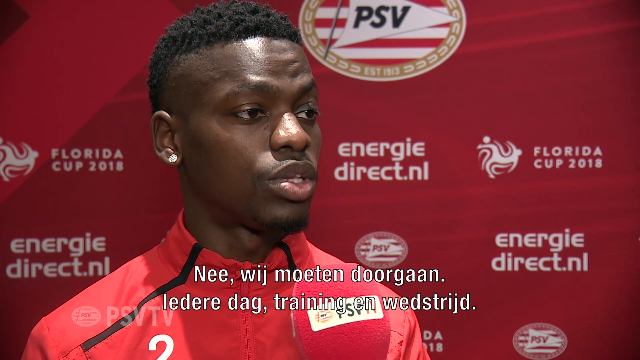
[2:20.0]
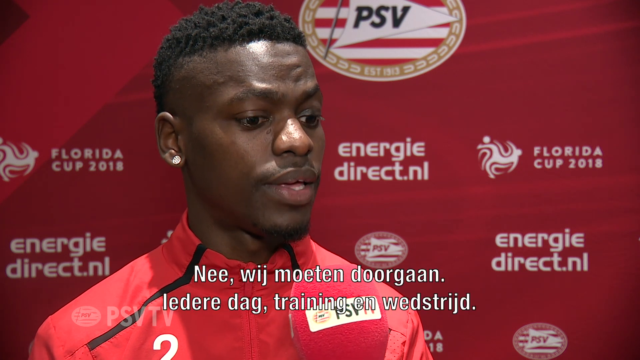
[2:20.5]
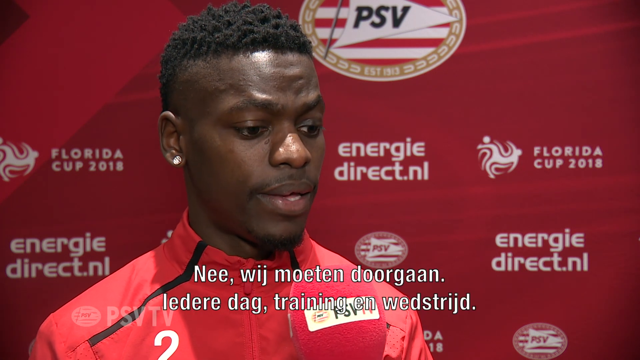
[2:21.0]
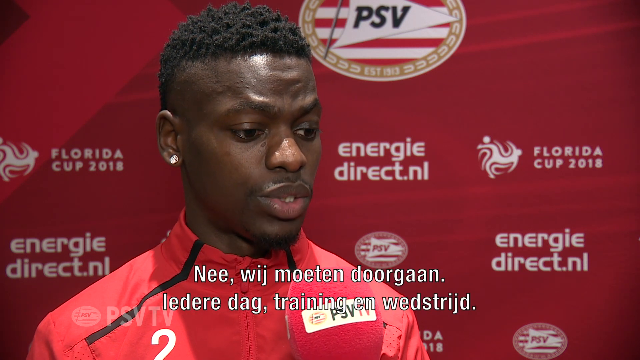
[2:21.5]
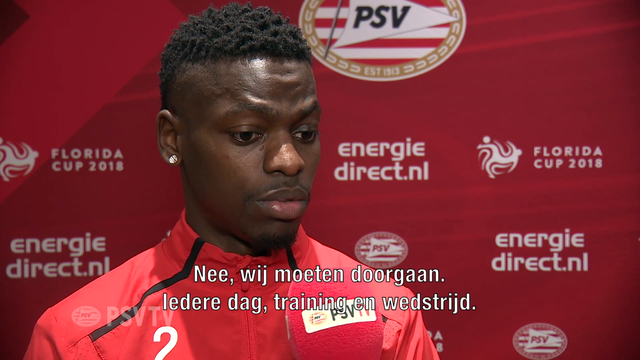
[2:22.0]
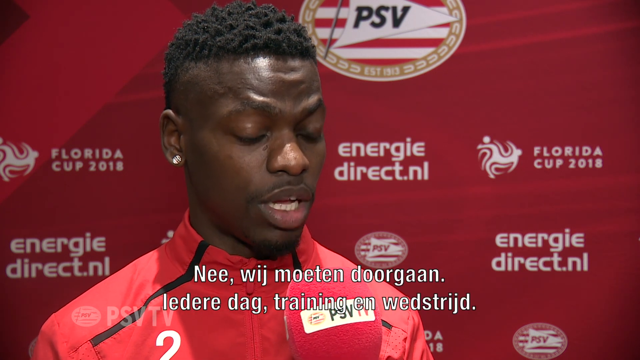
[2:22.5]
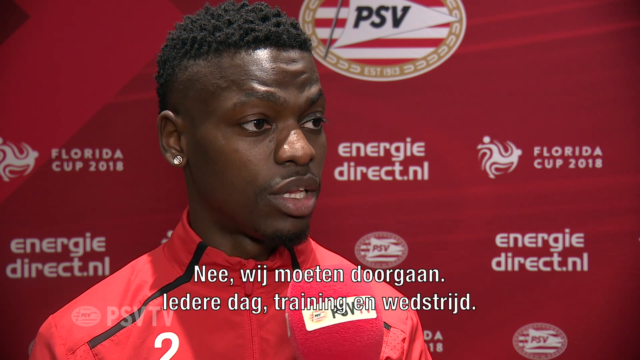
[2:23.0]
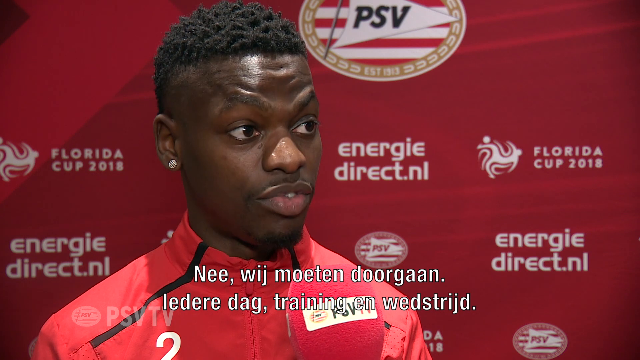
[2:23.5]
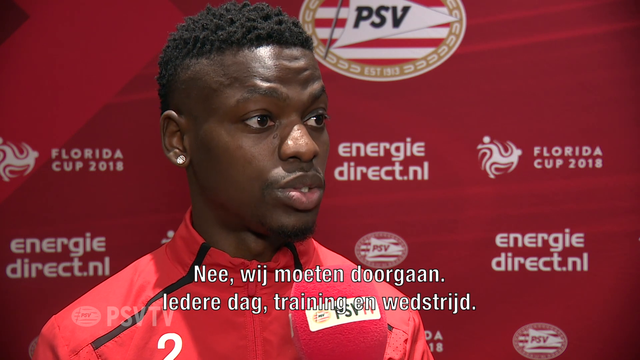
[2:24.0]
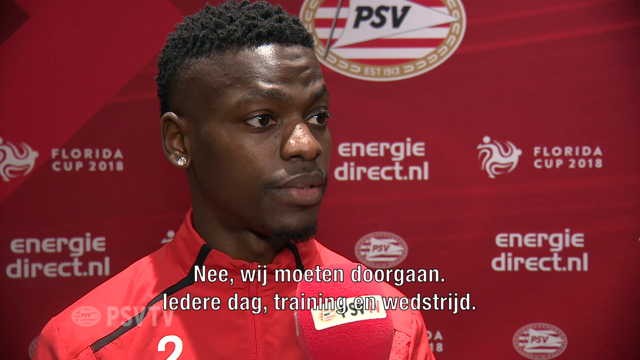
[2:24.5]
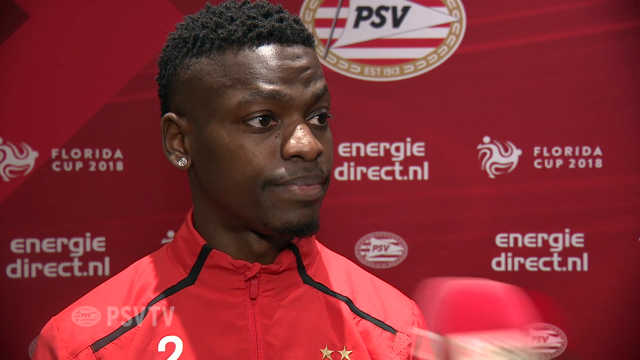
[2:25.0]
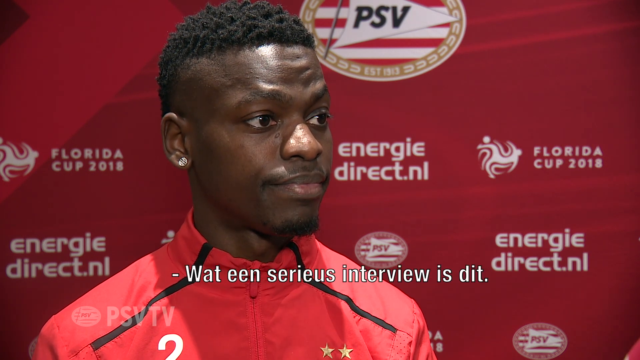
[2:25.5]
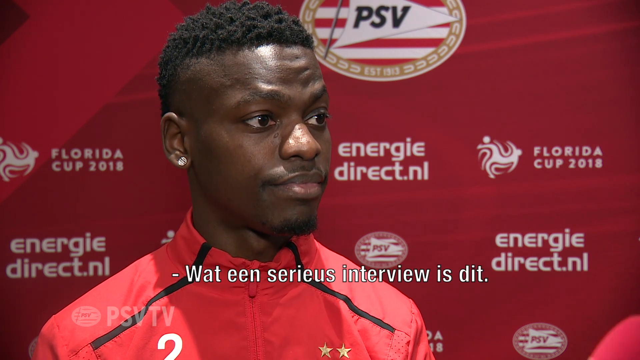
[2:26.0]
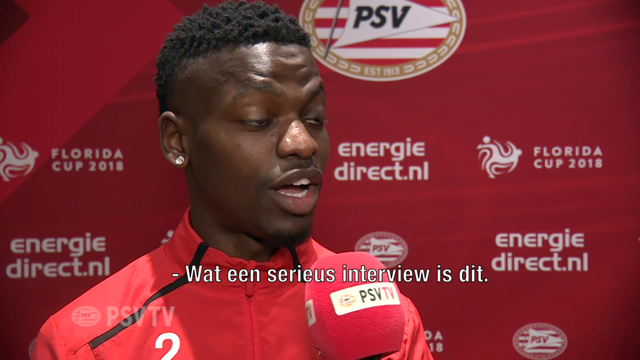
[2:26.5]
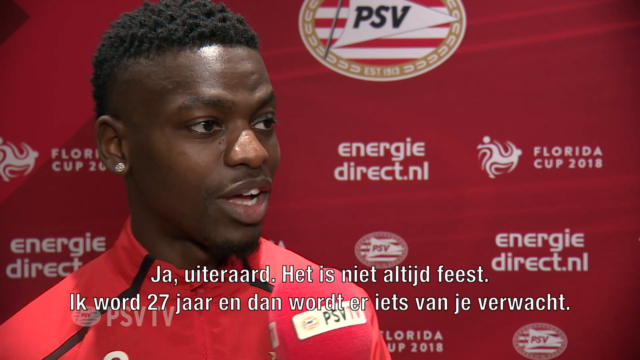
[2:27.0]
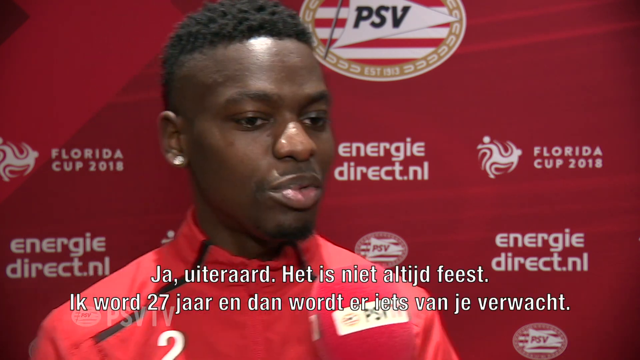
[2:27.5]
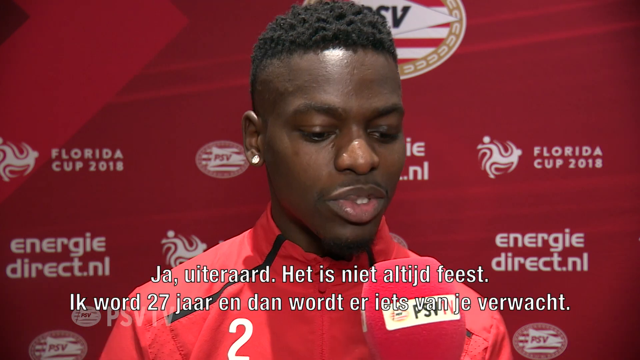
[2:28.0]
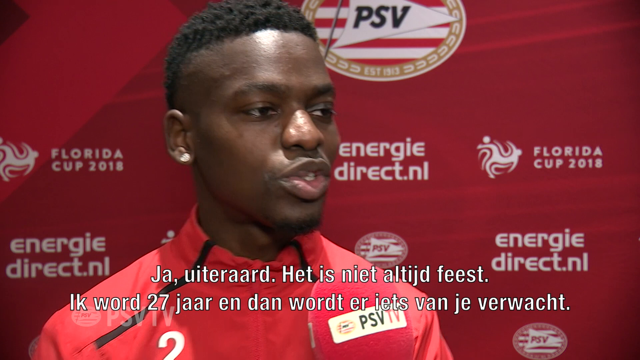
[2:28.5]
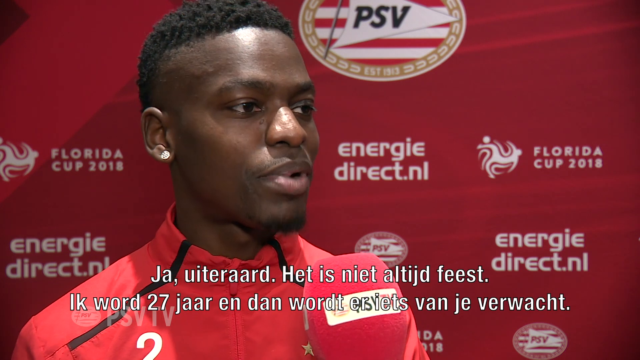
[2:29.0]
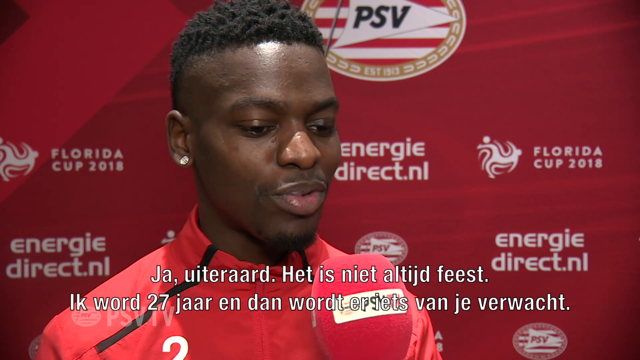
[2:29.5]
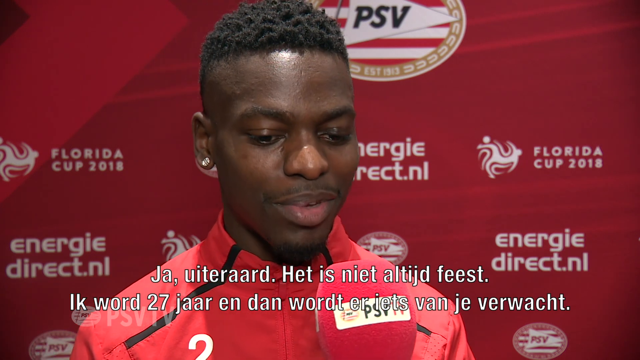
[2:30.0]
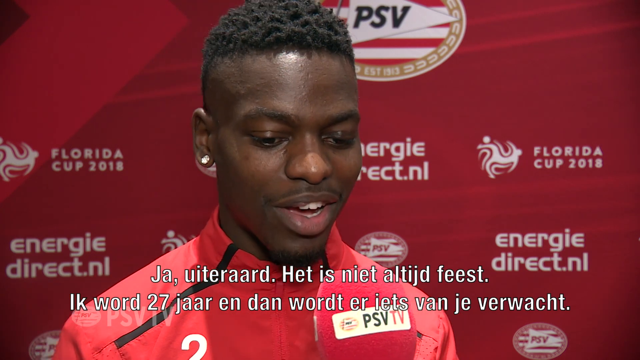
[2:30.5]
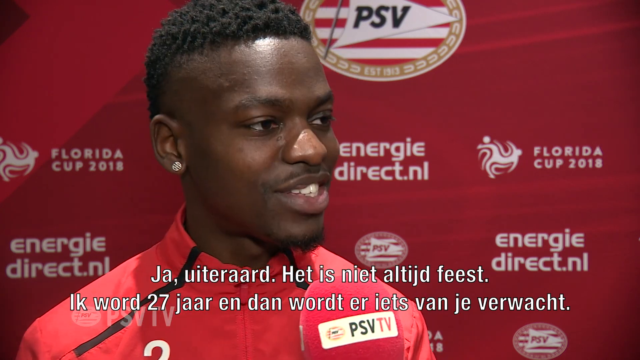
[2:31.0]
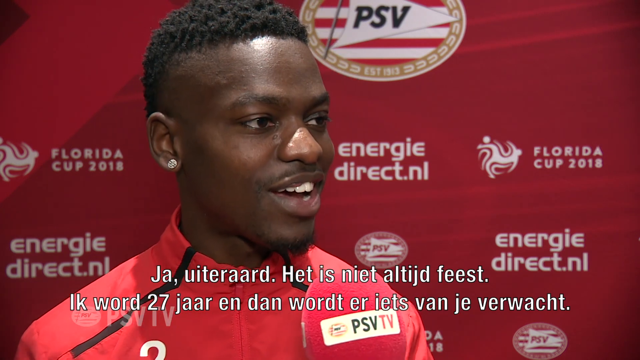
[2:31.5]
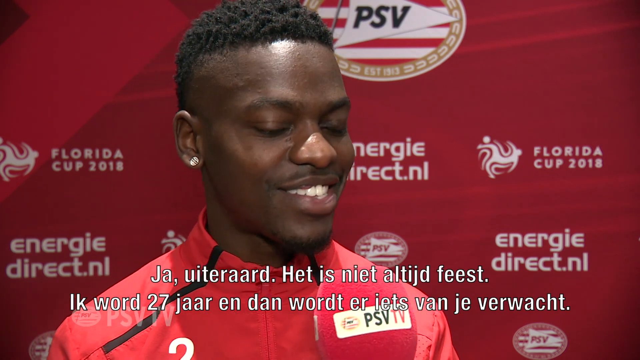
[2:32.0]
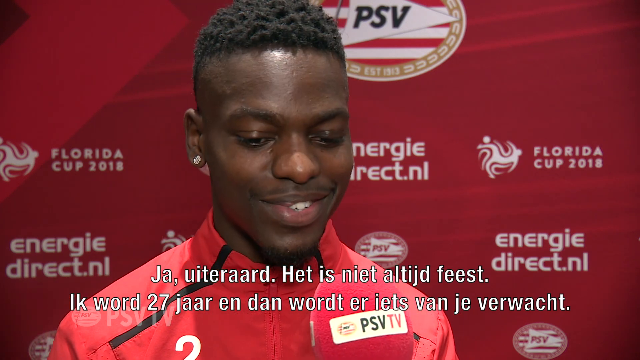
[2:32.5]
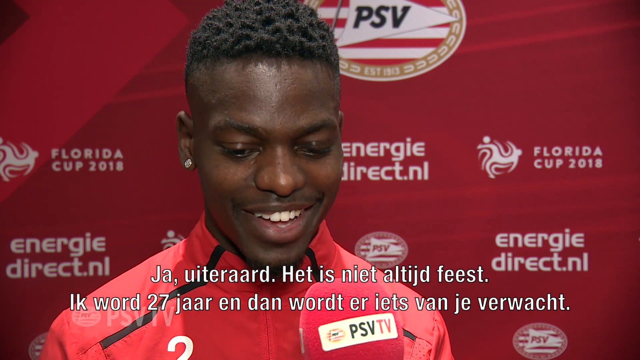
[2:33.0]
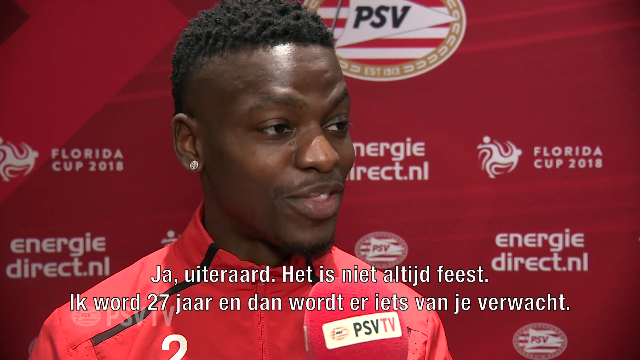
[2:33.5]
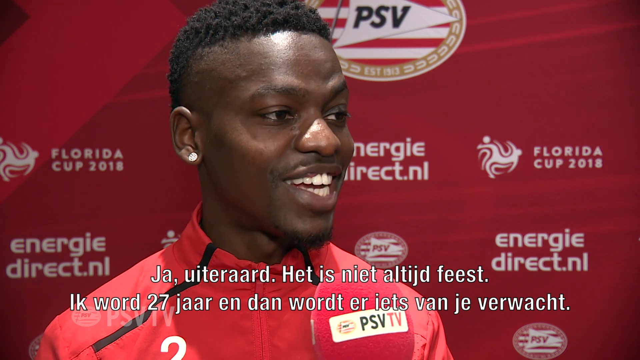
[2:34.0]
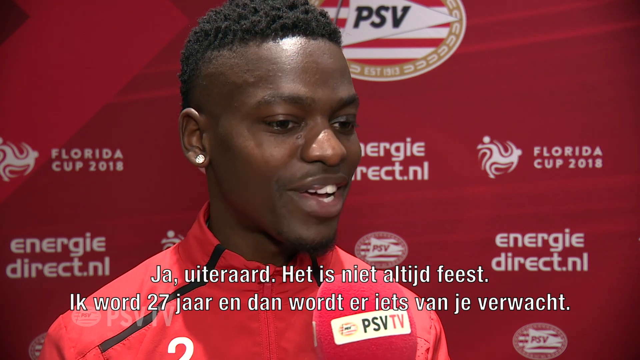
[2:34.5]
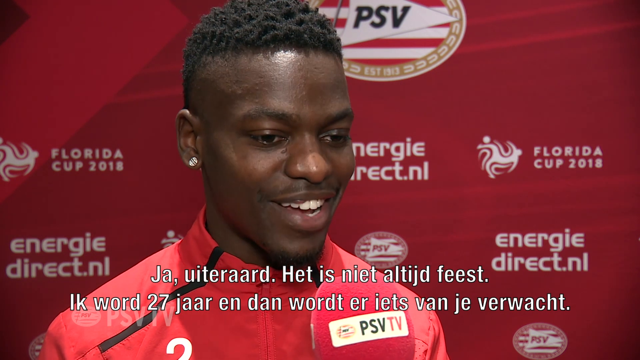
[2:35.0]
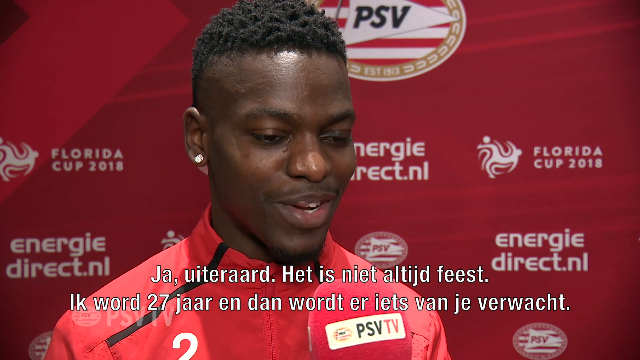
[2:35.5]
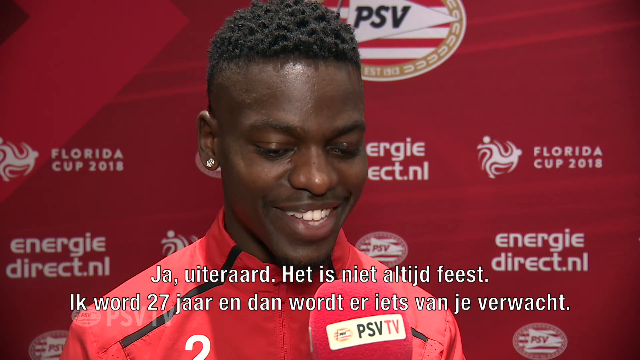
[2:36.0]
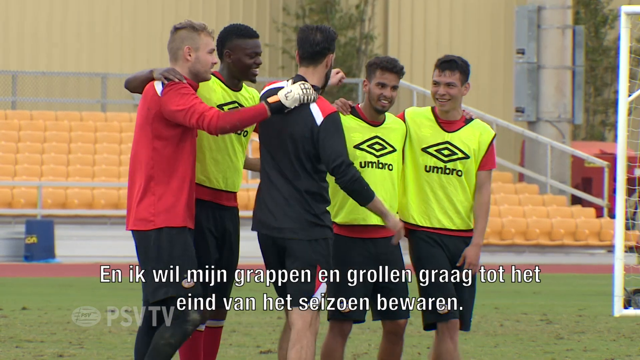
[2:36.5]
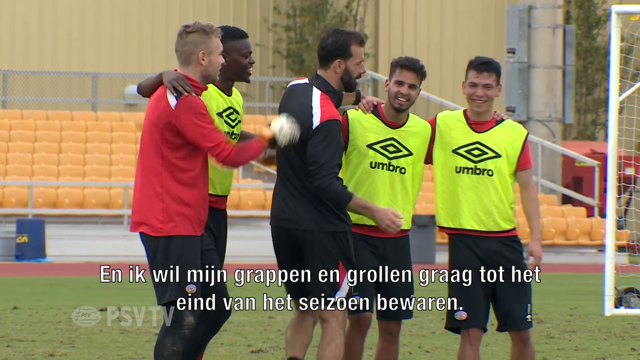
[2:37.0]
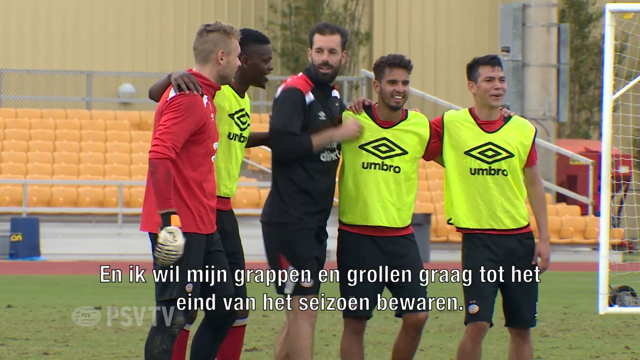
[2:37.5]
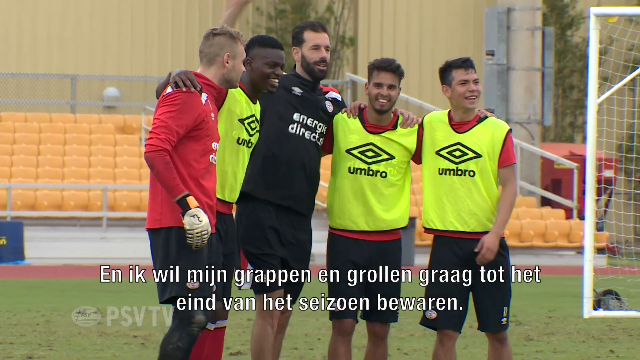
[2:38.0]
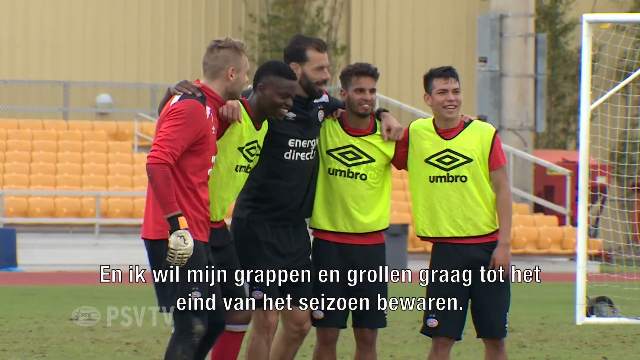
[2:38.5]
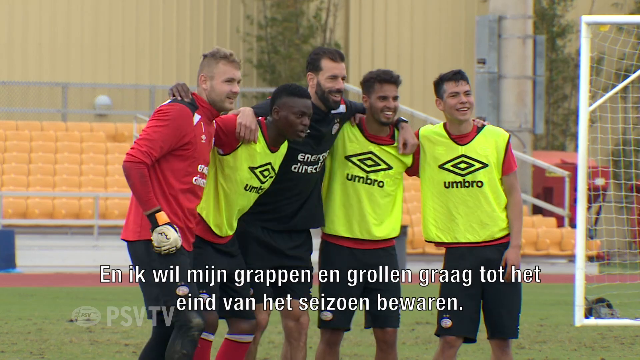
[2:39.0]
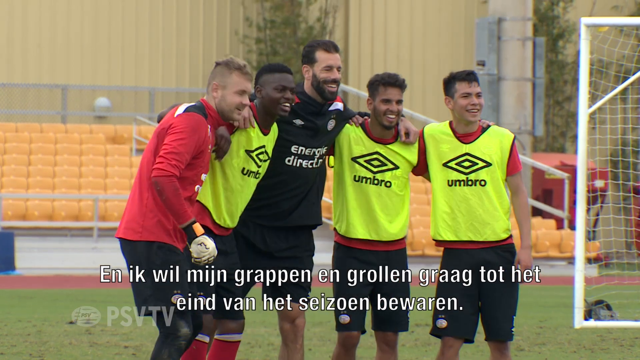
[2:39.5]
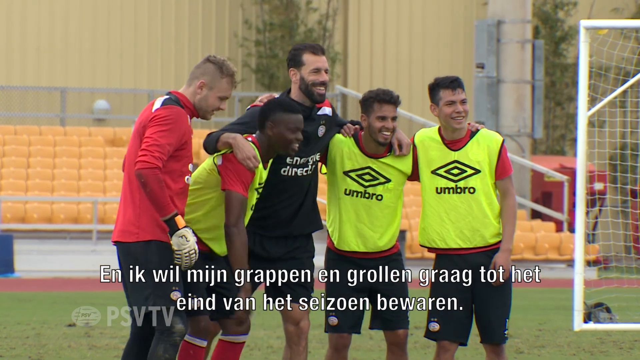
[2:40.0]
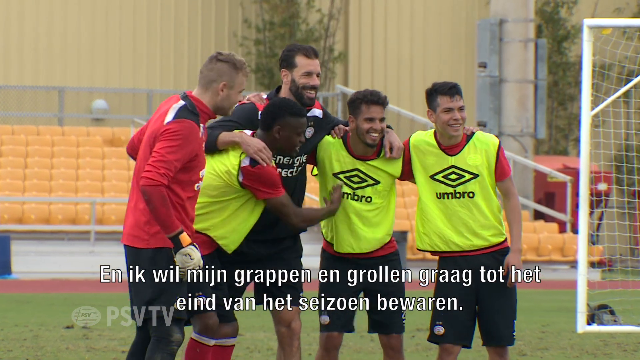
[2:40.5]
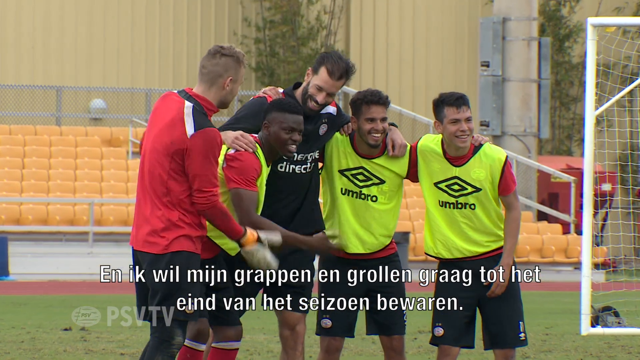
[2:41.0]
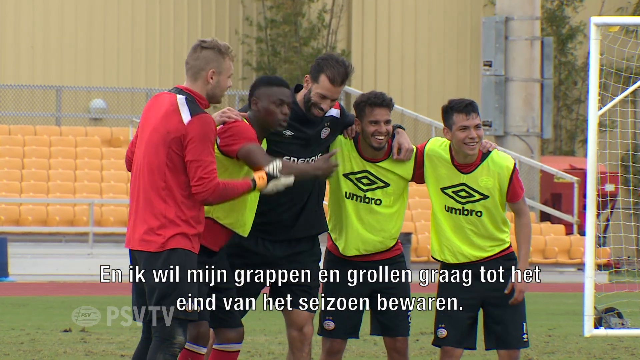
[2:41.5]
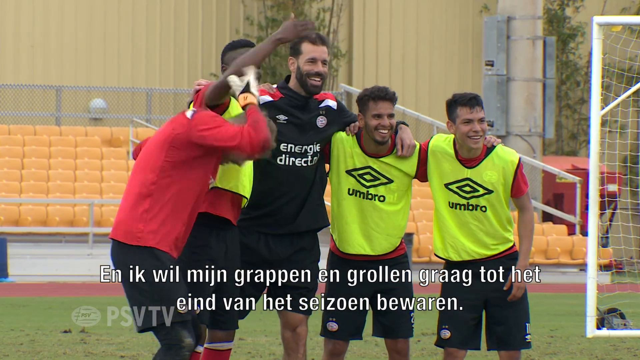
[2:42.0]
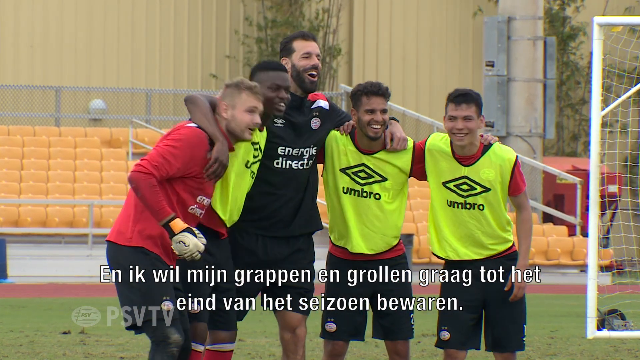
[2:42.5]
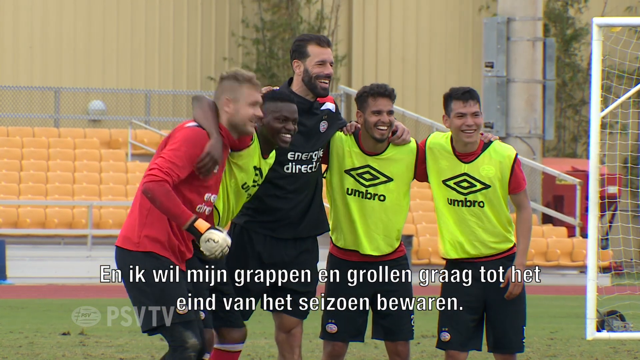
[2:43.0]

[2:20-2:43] An African American man with gold or diamond stud earrings is interviewed in front of a red sign covered in words, including "energydirect.nl" and "Florida Cup 2018". A red microphone is in front of his face, and he is smiling. A PSV emblem is behind his head, and captions appear at the bottom of the screen, possibly in French or another non-English language. At the end, the team gets together on a grassy soccer field; three of them wear yellow jerseys that say "umbro", and they are smiling and happy, as if they maybe won their match.